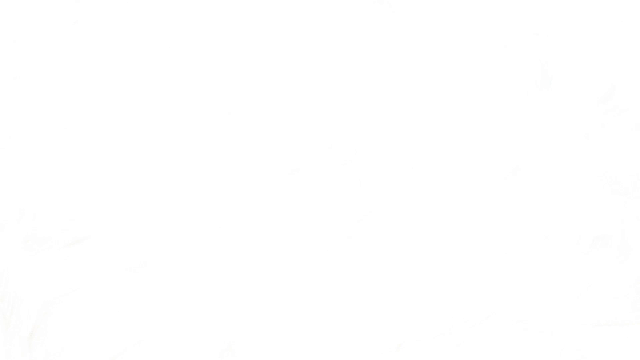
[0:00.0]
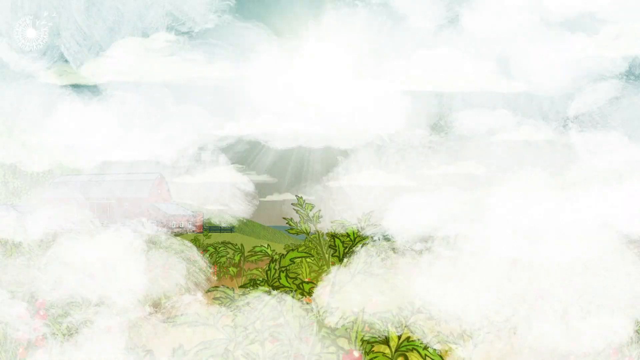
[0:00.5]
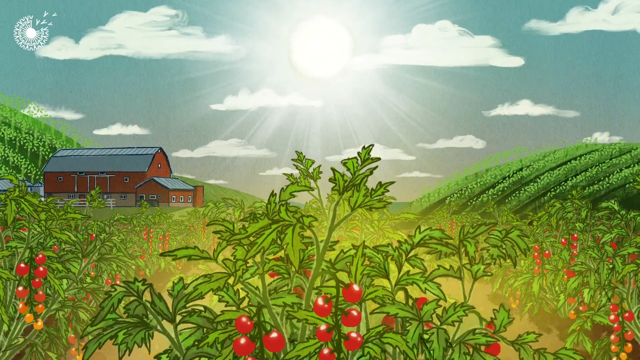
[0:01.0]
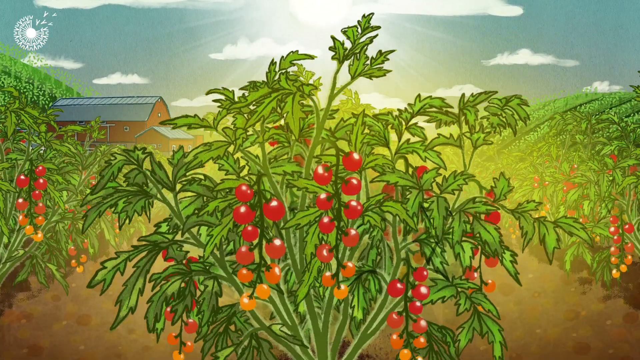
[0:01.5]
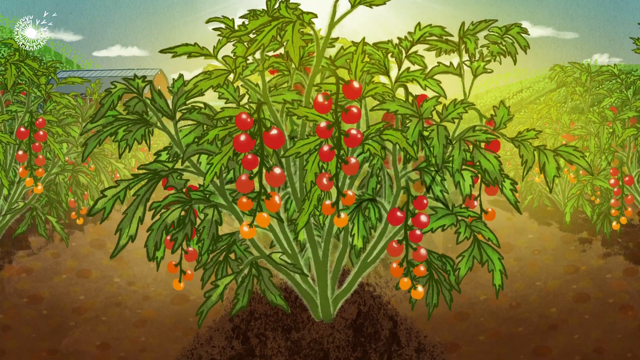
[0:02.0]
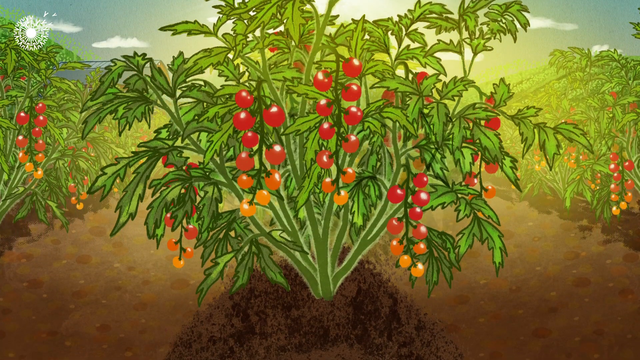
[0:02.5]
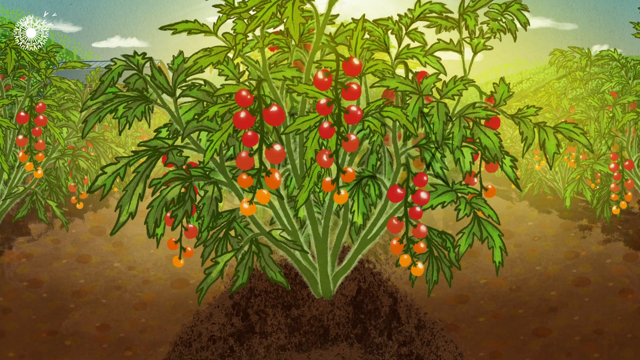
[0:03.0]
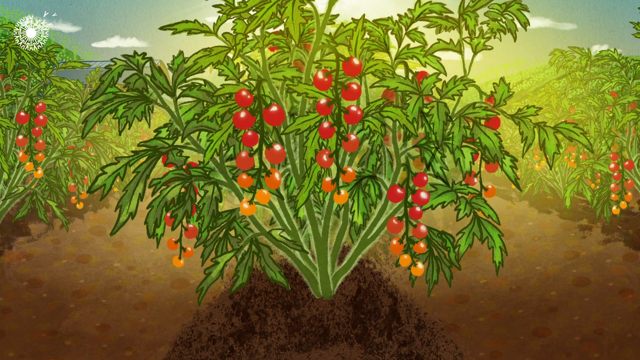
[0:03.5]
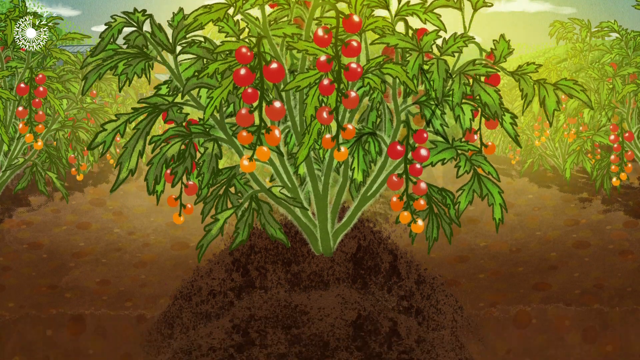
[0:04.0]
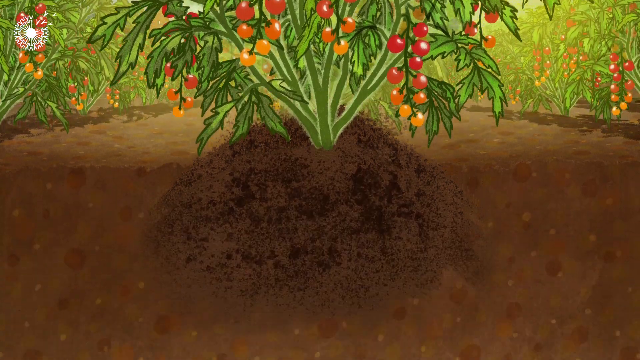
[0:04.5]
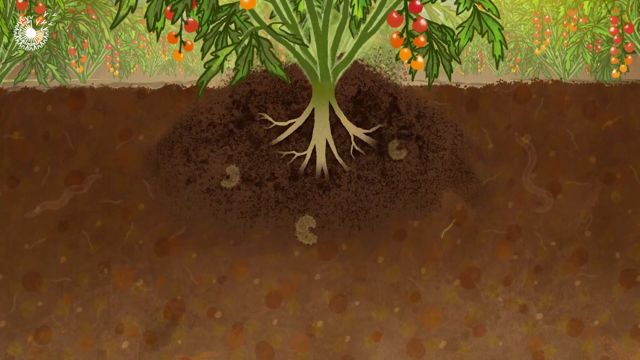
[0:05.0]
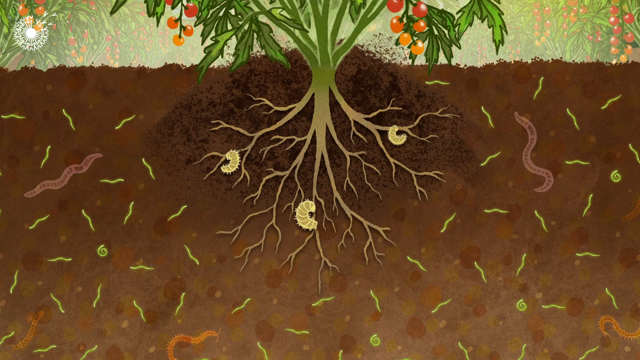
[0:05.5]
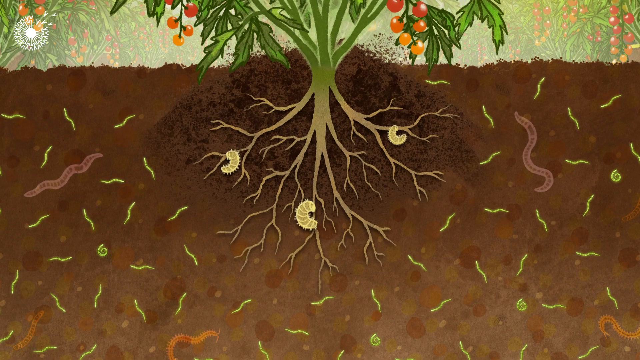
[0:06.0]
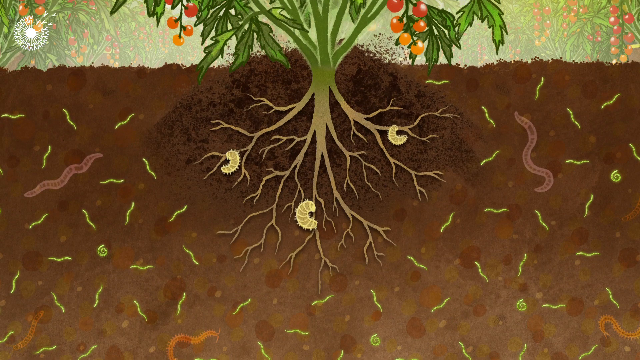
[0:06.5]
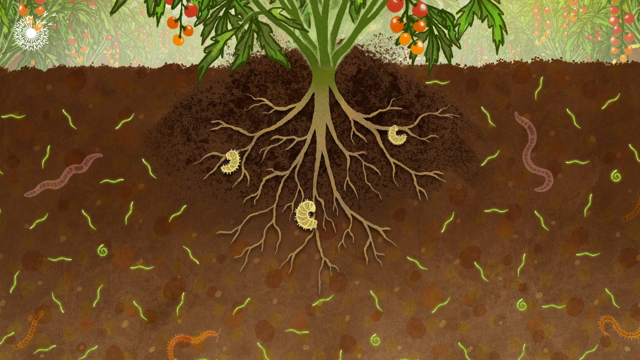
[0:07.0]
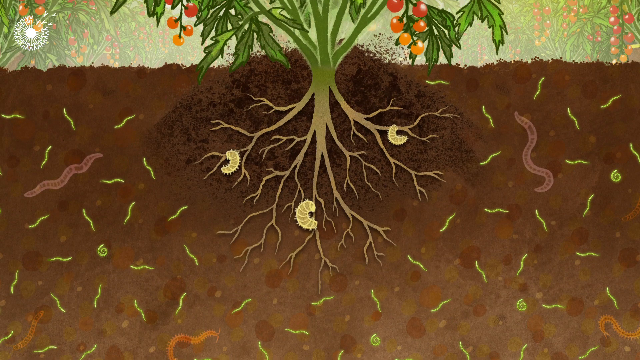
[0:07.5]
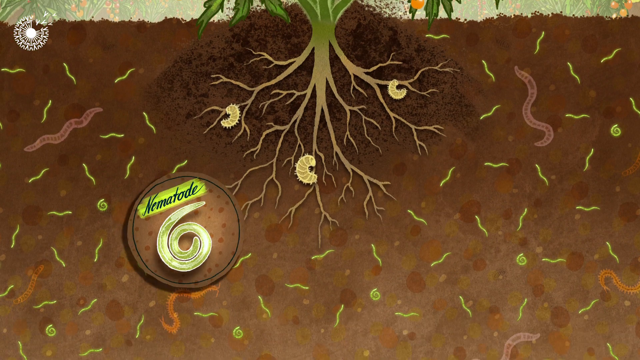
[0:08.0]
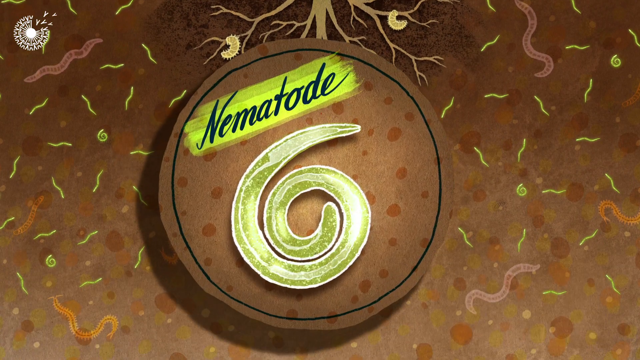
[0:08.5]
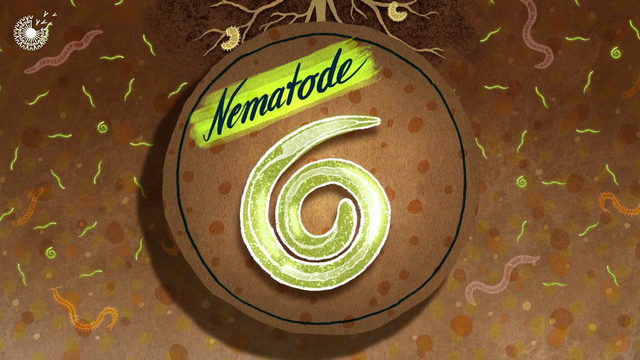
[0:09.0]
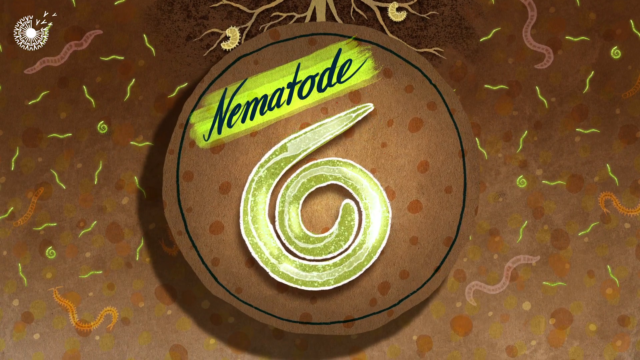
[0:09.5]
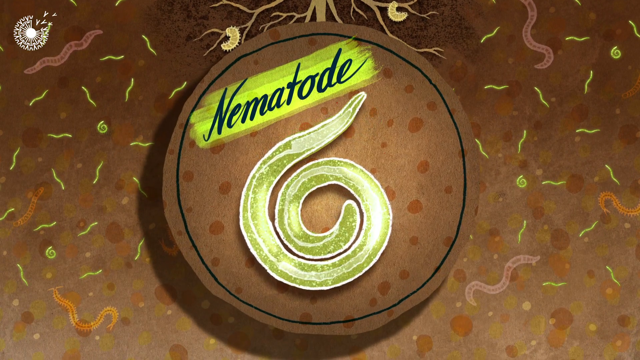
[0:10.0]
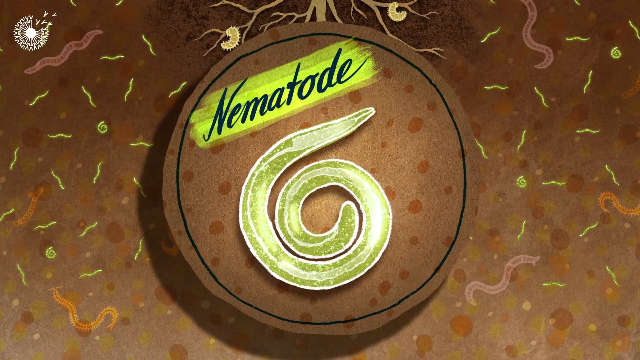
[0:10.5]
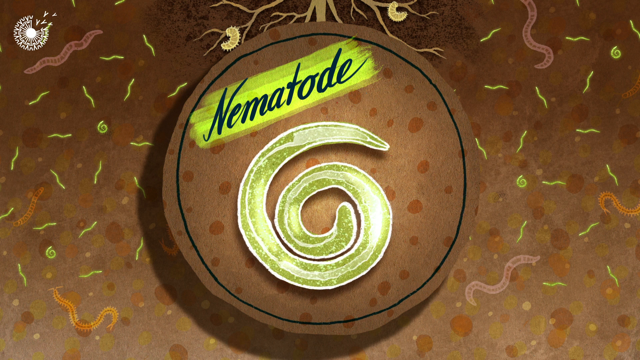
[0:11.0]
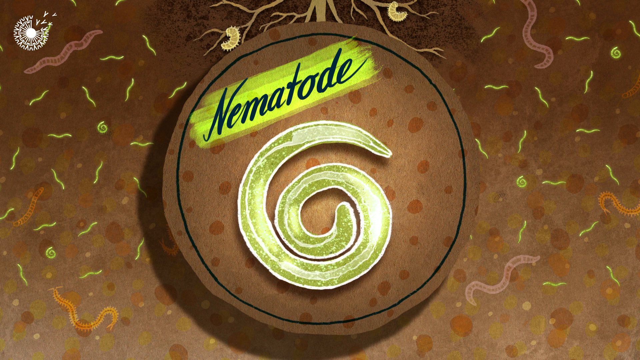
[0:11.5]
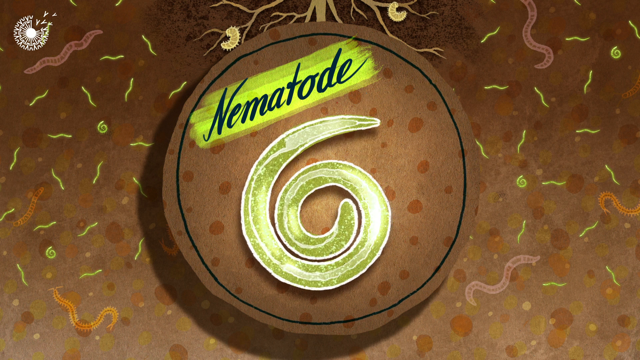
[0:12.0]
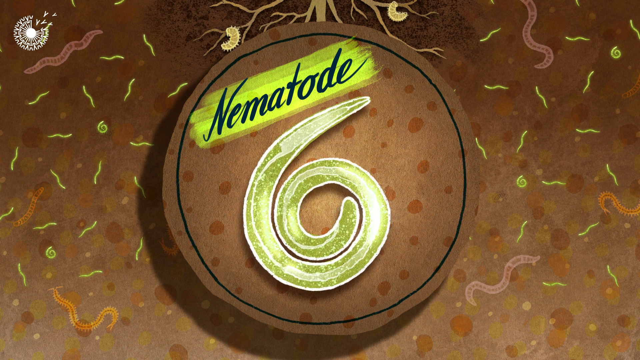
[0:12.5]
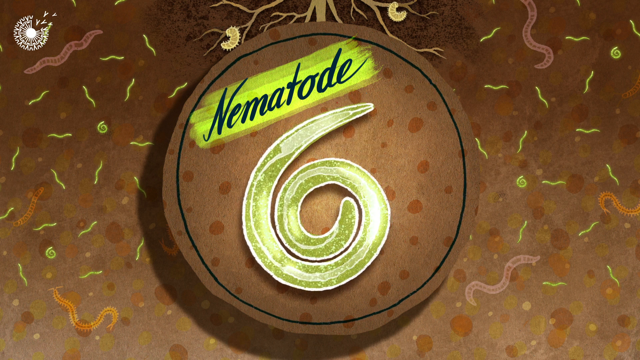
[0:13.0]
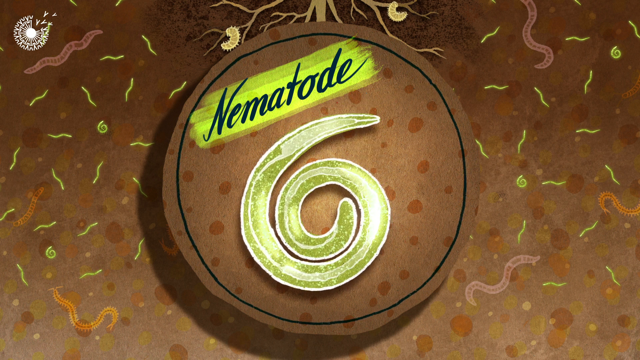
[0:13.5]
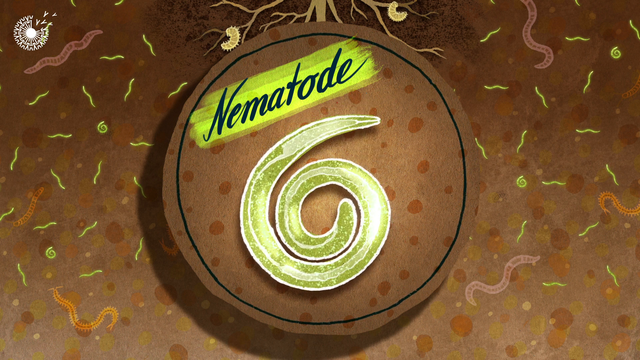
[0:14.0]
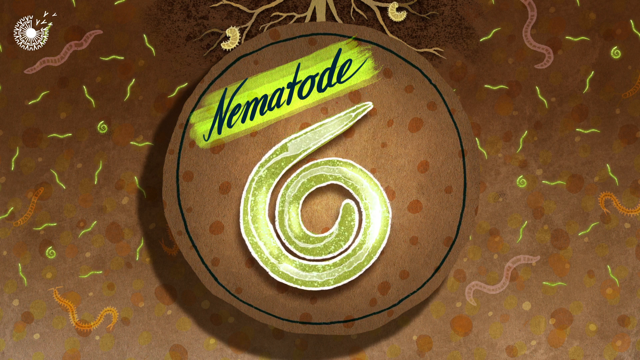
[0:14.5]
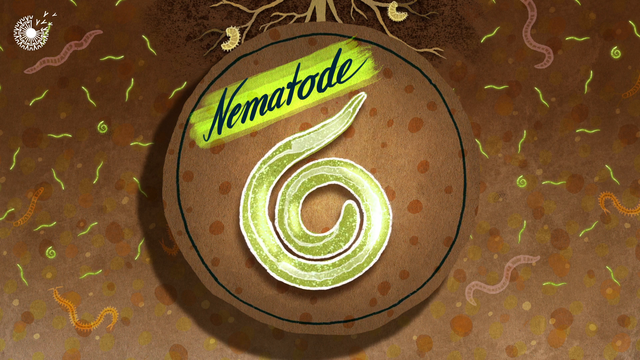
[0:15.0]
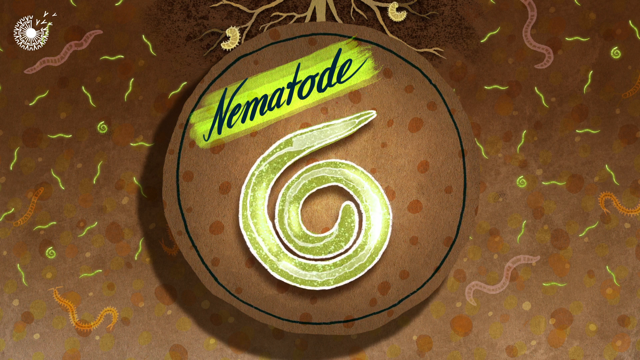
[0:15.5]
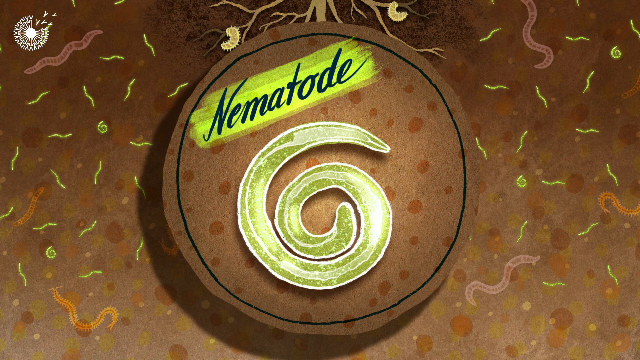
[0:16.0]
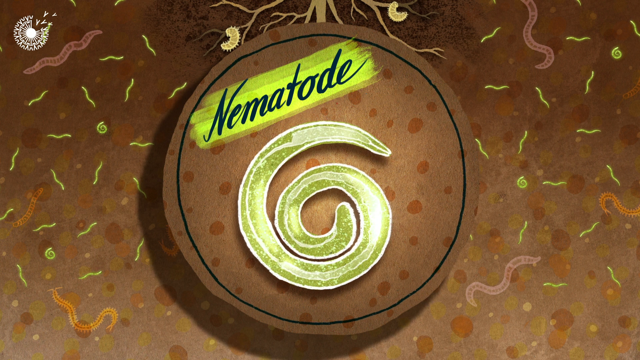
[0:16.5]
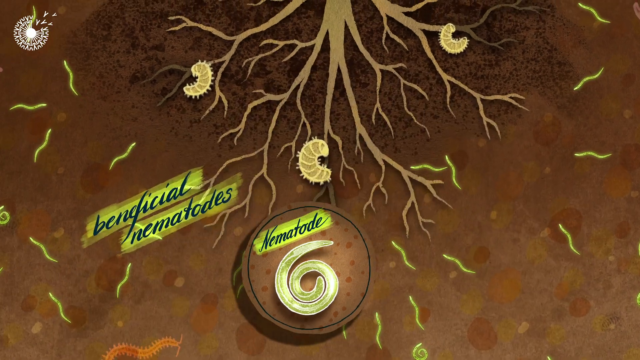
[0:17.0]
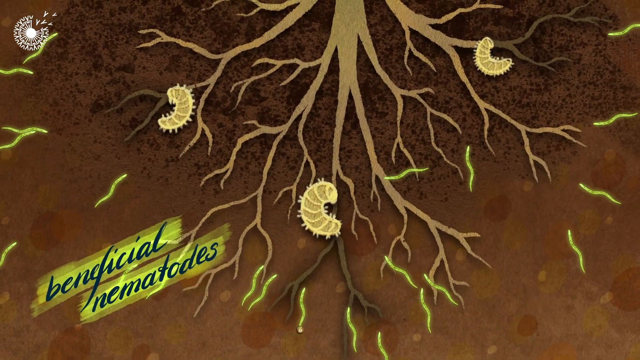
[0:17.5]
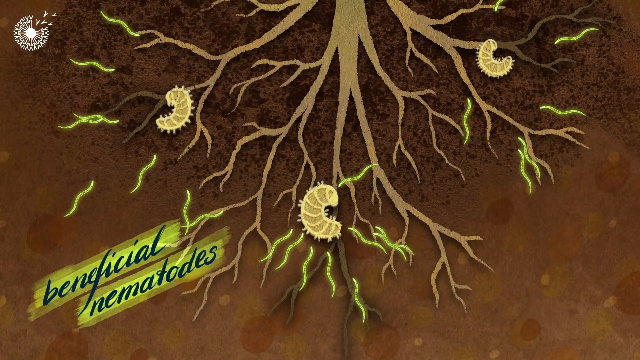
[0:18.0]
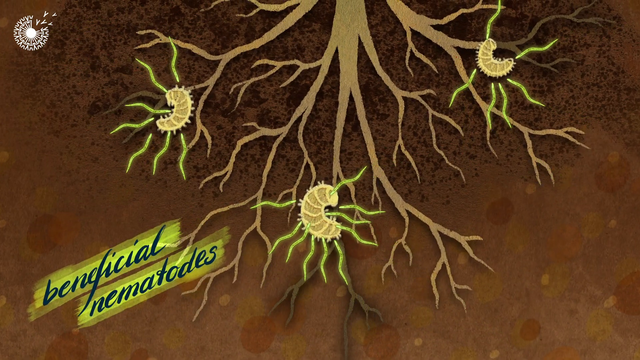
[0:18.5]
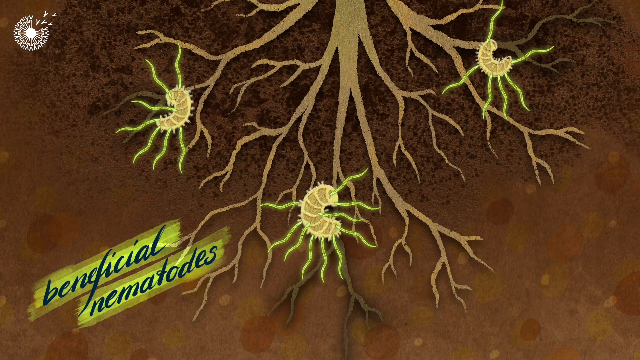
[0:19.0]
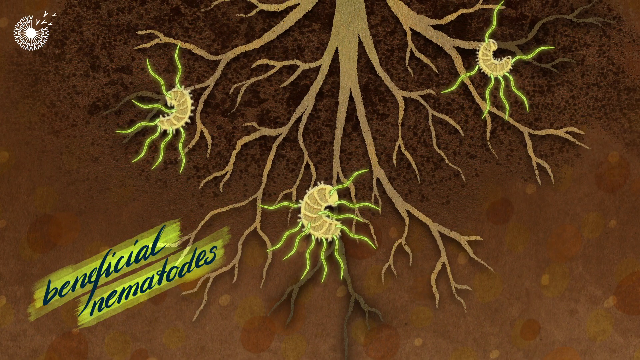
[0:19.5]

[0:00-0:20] Clouds appear to part away, and the view scrolls down to show what looks like clouds and sky in the background with a barn on the left side. The view scrolls further down to what looks like a cherry tomato tree: a little green branching tree with four branches of cherry tomatoes coming down off it. The view moves lower to the mound of earth the plant is growing out of and shows the roots growing out from its middle. There appear to be three little caterpillars at the bottom of the roots, and many green worms in the soil below. Suddenly the view goes into one of the worms, which expands into a little circle; the circle grows to the middle of the screen and looks like a large brown circle with a swirly green worm in its middle. At the top of the circle, a green highlight reads "nematode." The green worm squirms around in its little swirl. An animation then shows the green worms moving toward the three caterpillars at the bottom of the roots, while at the bottom left a green highlight and blue text read "beneficial nematodes." The green worms appear to attack the caterpillars, and the scene fades out.